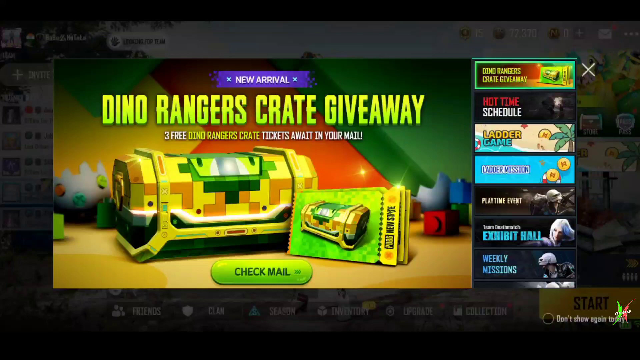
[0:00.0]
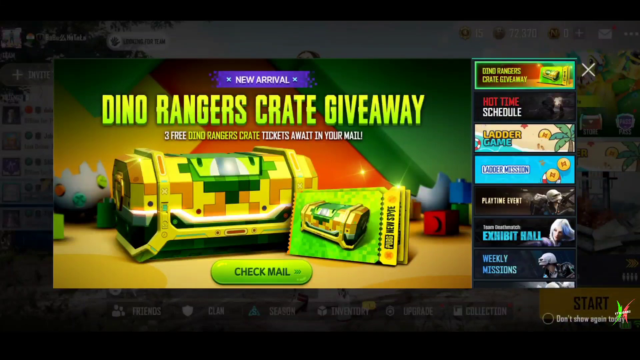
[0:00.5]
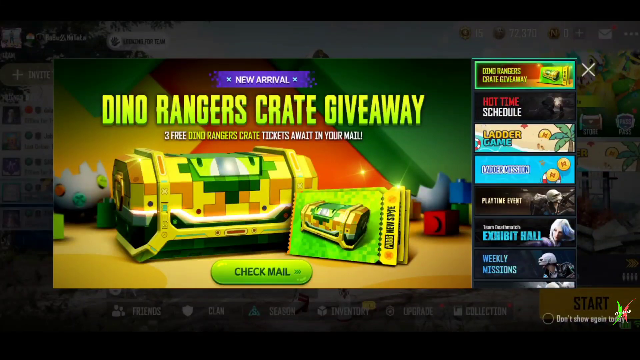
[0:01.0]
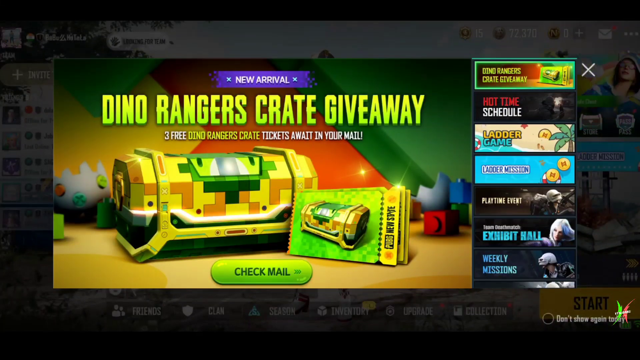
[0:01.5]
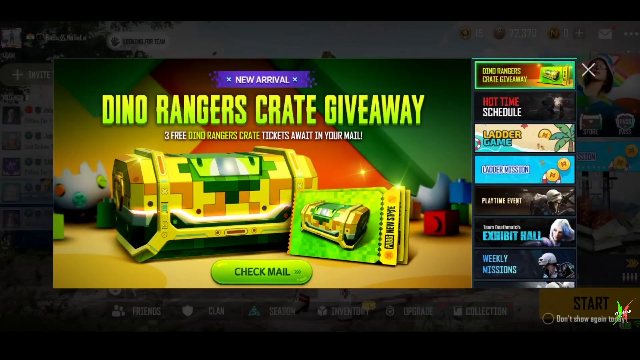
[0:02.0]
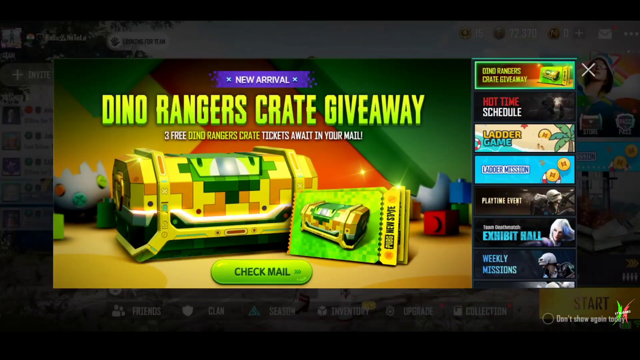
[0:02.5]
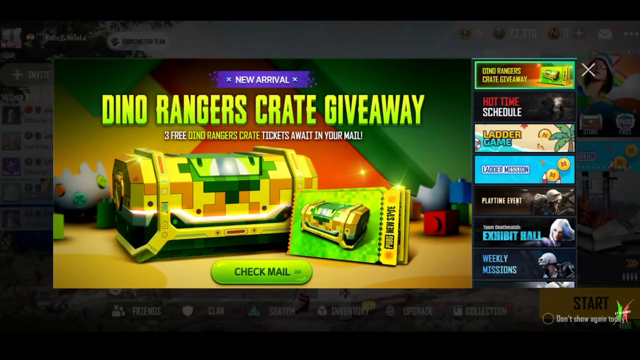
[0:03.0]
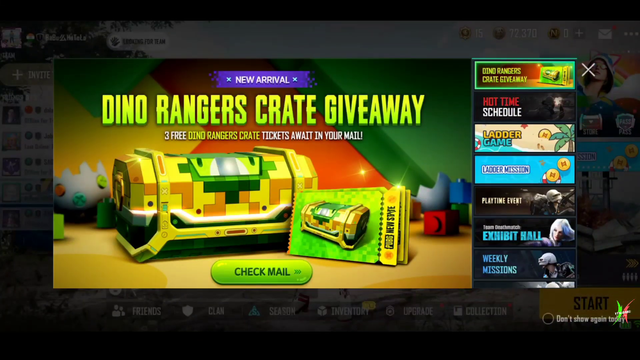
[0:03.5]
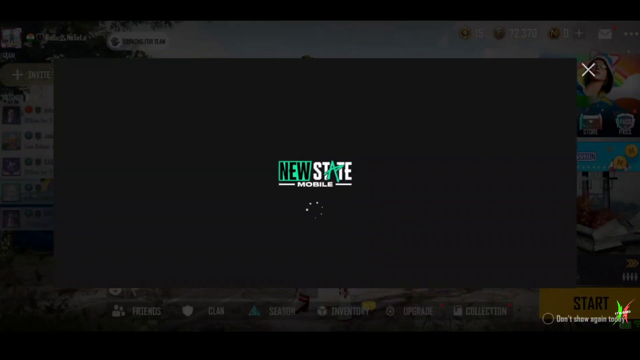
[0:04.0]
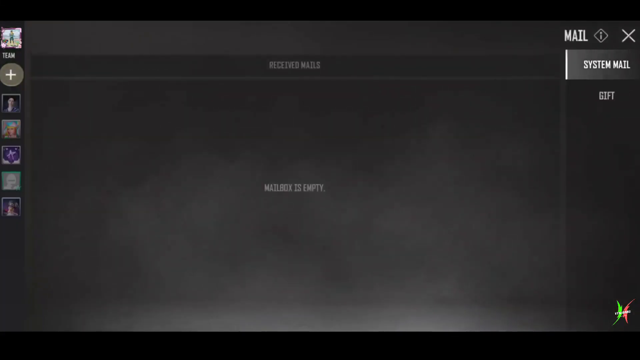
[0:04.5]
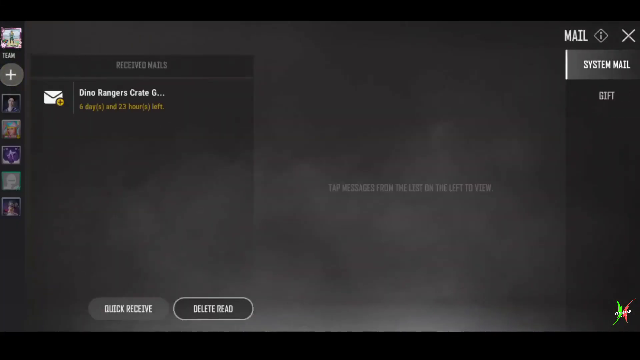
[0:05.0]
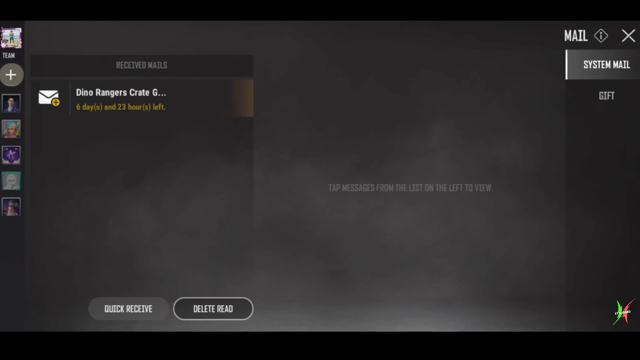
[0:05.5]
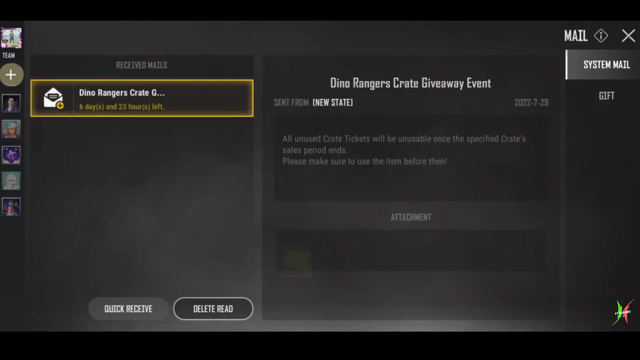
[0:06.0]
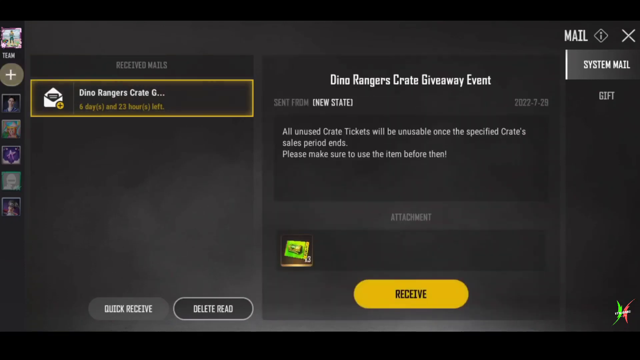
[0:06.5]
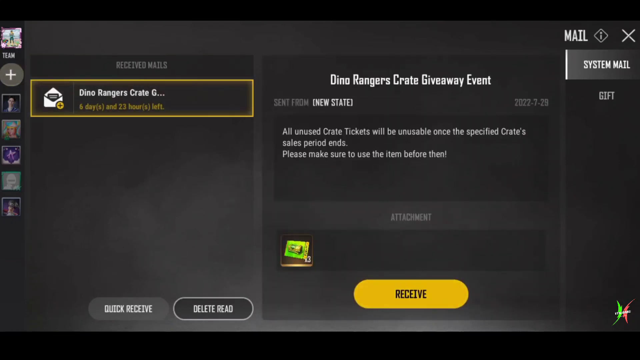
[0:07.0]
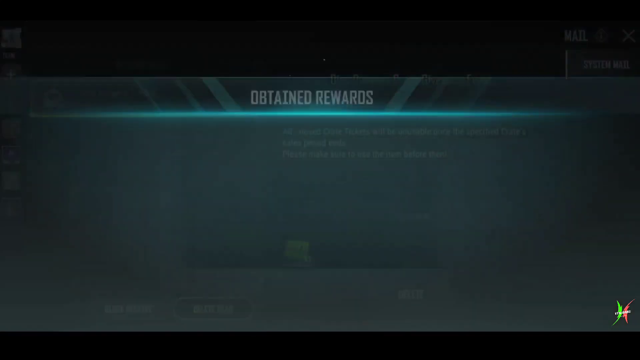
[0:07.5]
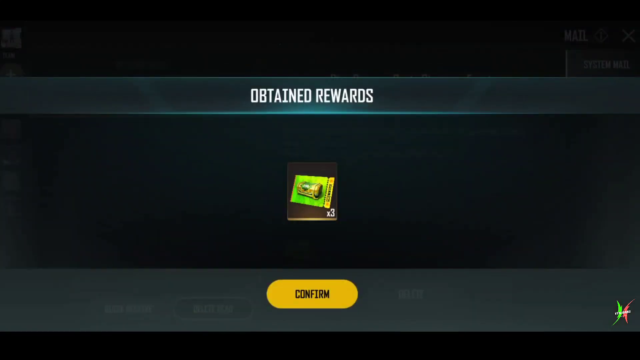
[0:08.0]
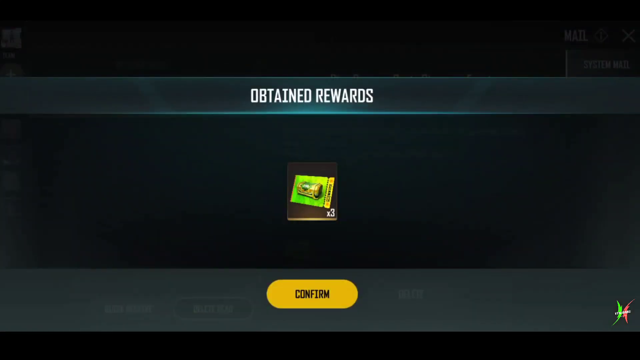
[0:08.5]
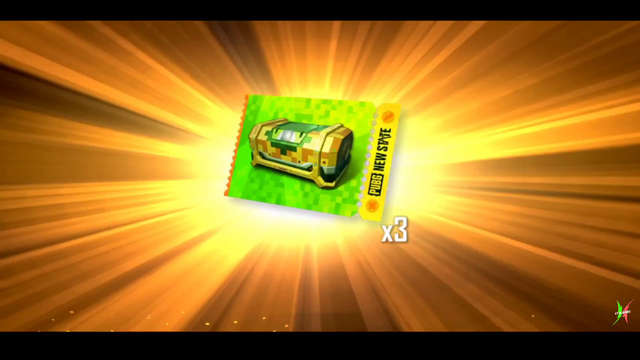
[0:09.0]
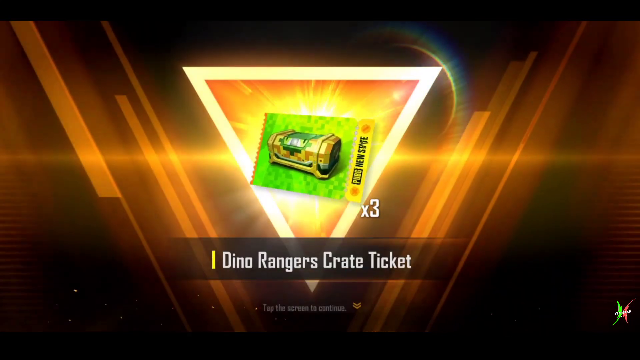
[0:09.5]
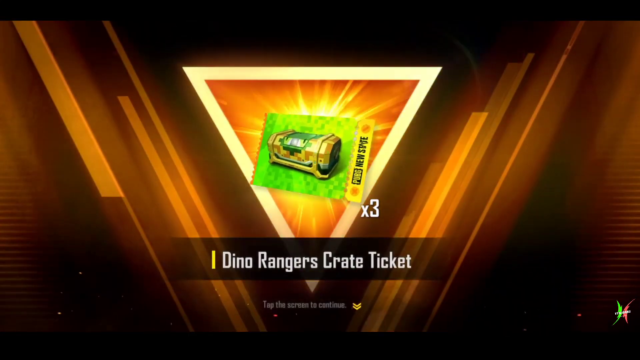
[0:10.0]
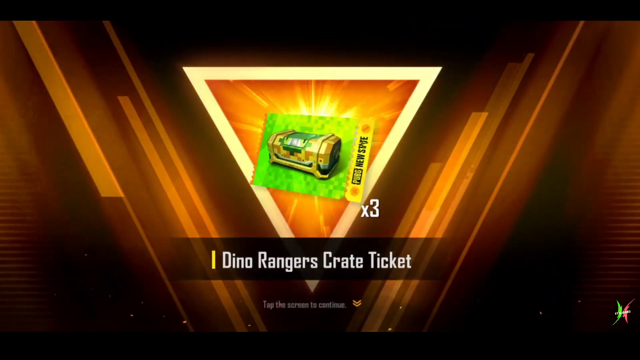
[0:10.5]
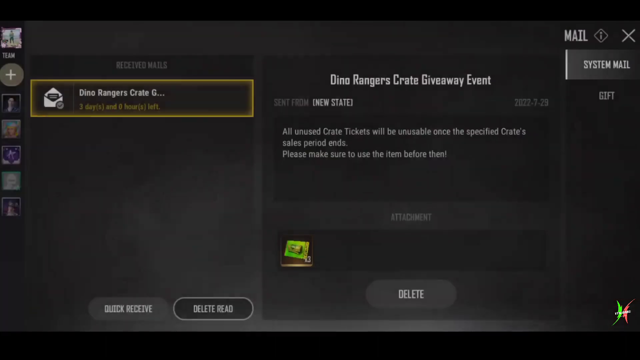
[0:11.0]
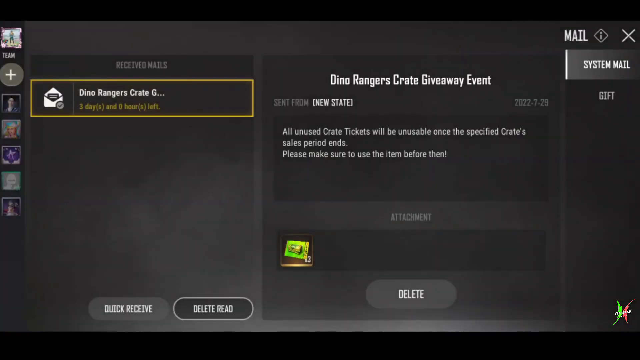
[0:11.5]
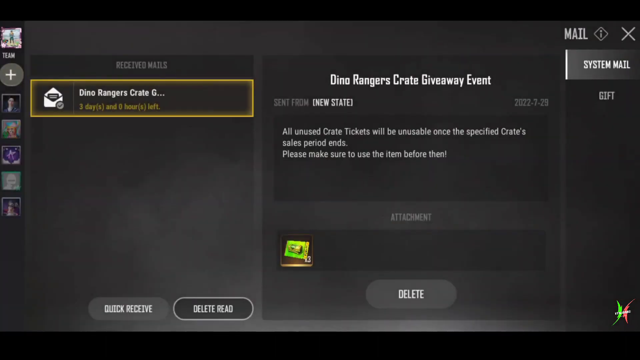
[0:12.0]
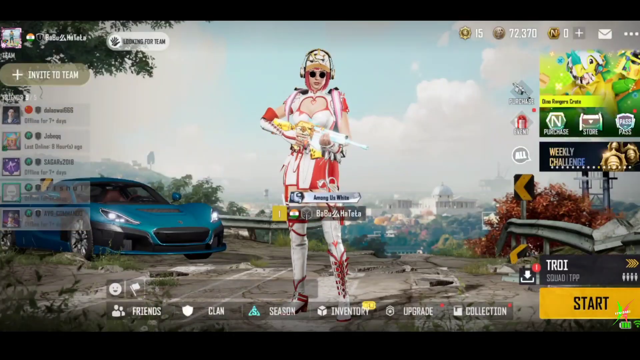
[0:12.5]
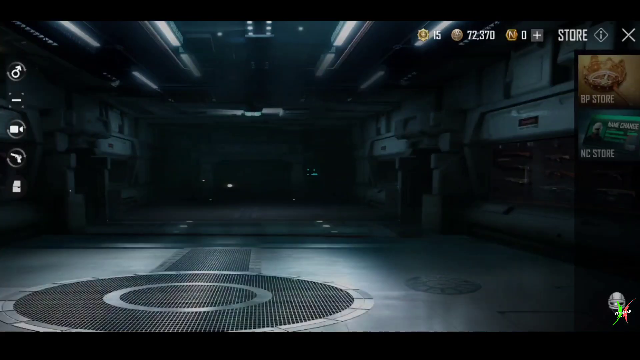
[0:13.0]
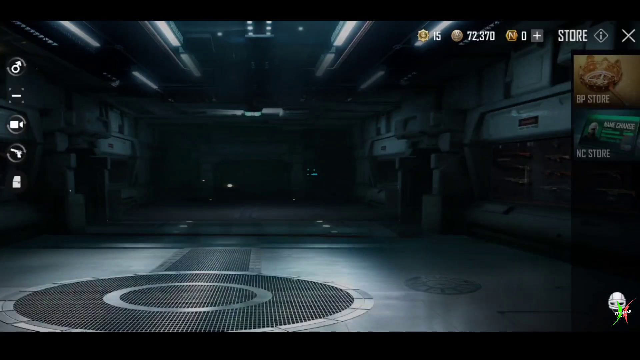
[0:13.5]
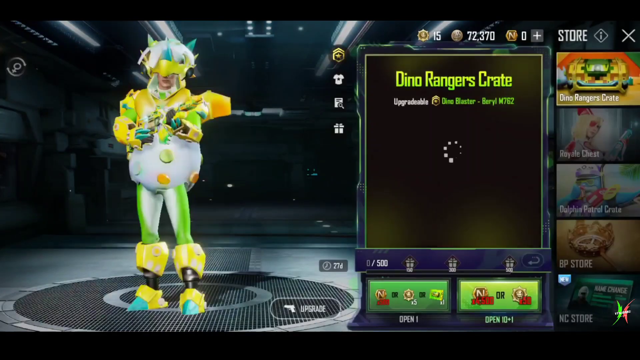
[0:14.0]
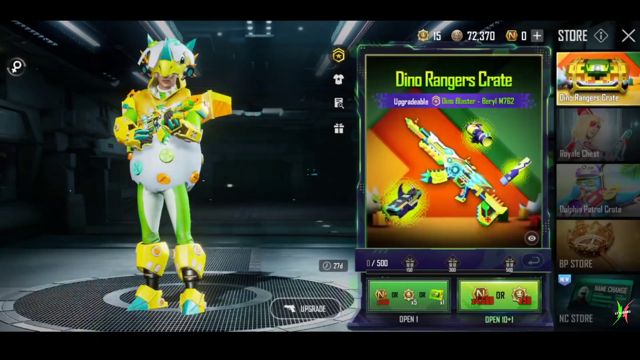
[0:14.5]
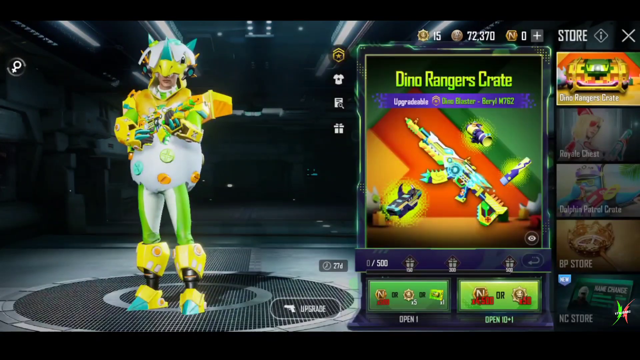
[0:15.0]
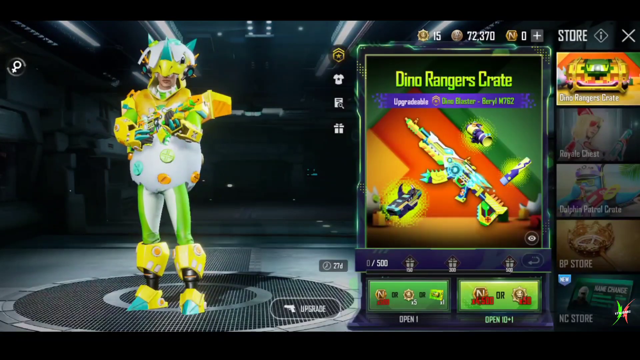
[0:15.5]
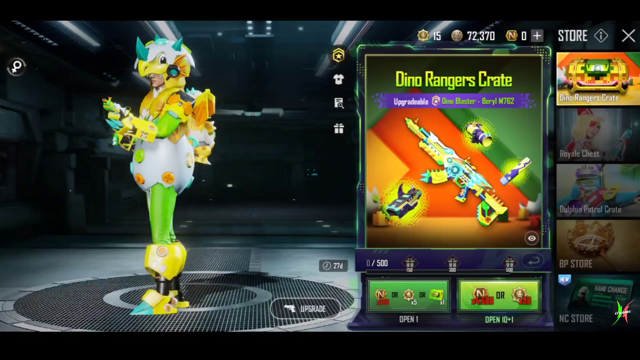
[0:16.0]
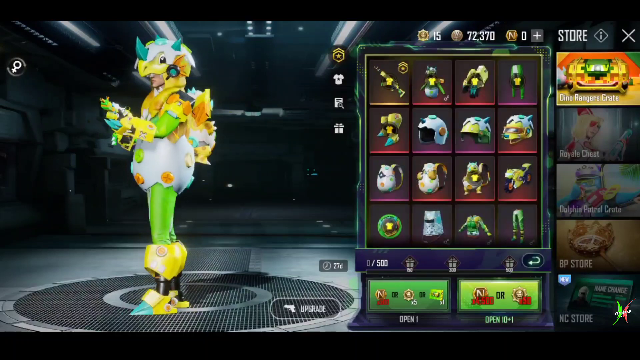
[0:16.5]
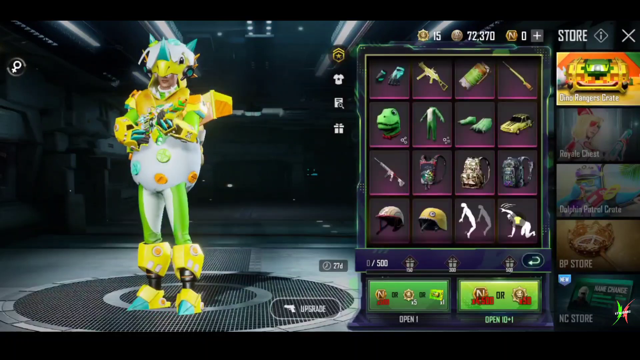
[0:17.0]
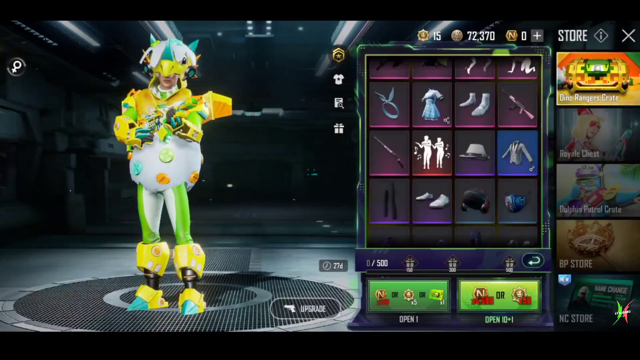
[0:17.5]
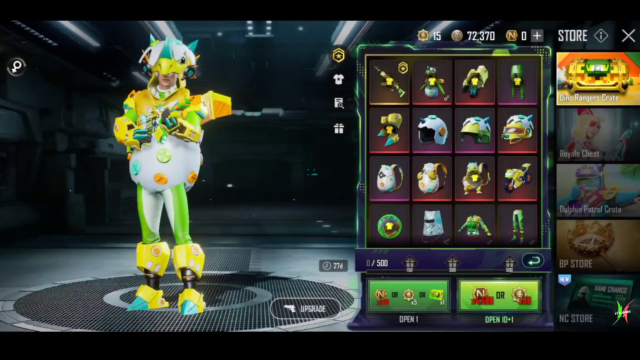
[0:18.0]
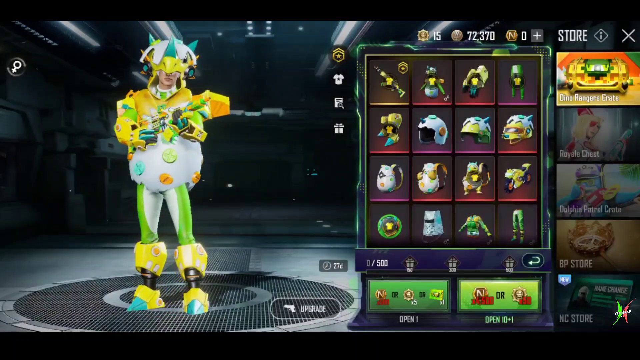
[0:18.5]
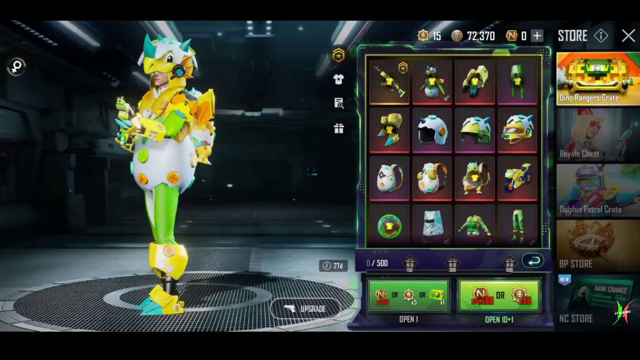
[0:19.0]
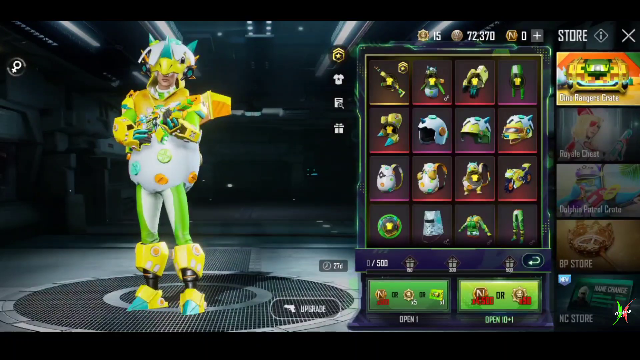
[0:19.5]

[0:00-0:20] The video is of a game that is either a battle royale or a Call of Duty type of game with different game modes. It opens on a promo that reads "Dino Rangers crate giveaway" in green text. A second line of text underneath reads "three free Dino Rangers crate tickets await in your mail." At the bottom there is one large golden crate with what appears to be a green lock, green check mail buttons at the bottom, and three tickets on the far right that read "PUBG new state." Other events are also listed, such as time schedule, ladder game, ladder mission, play the event, team deathmatch exhibit hall, and weekly missions.